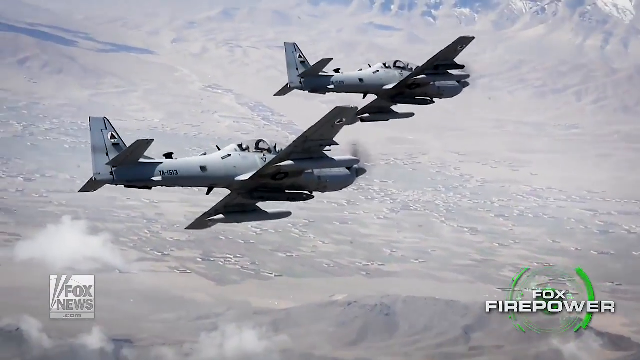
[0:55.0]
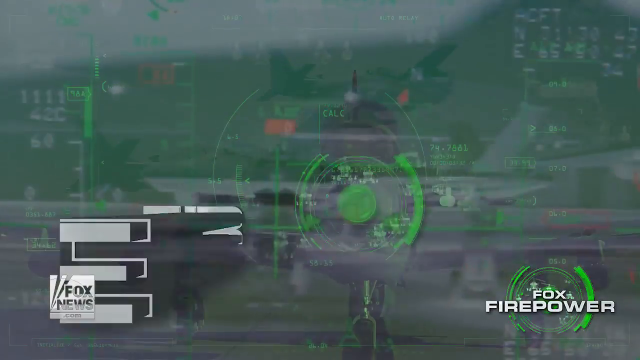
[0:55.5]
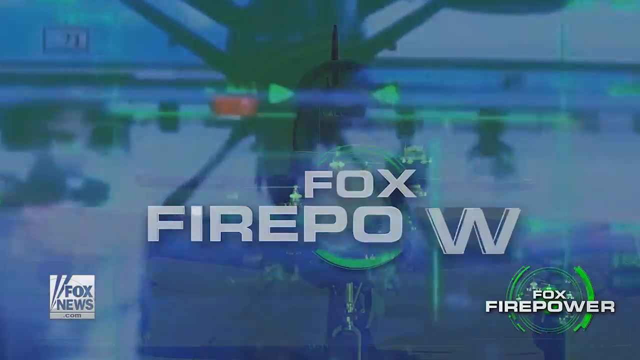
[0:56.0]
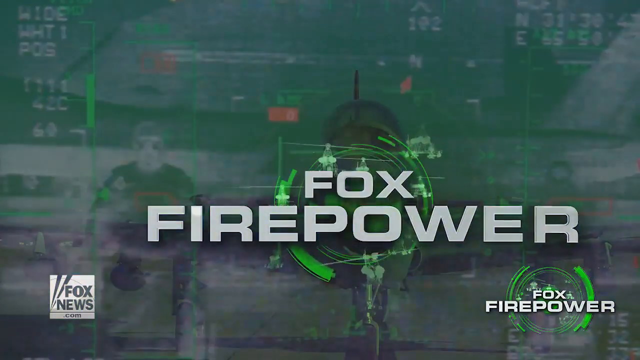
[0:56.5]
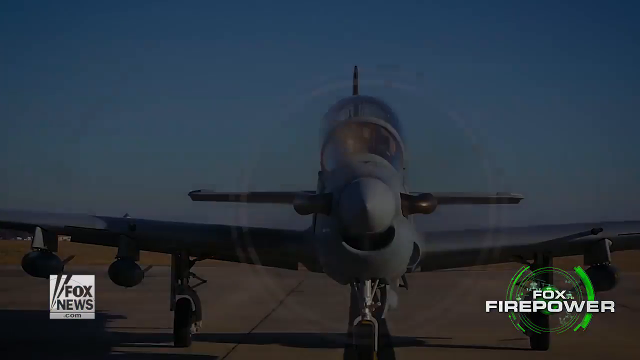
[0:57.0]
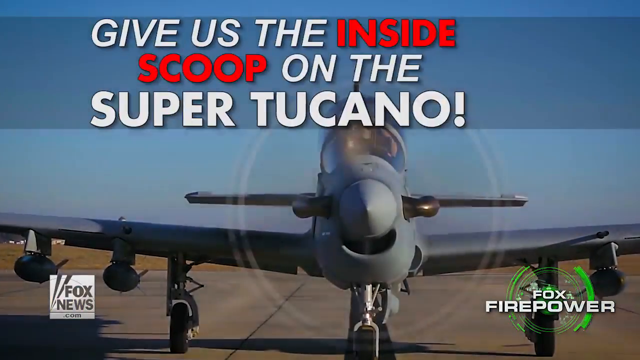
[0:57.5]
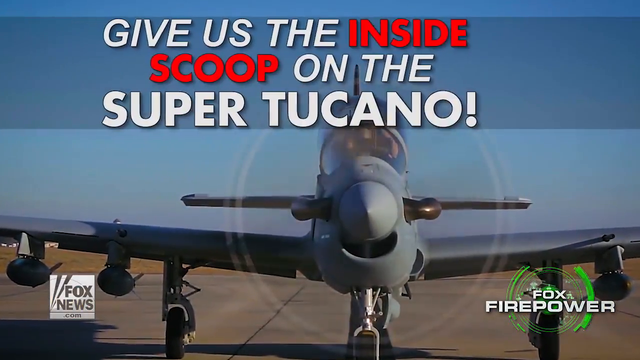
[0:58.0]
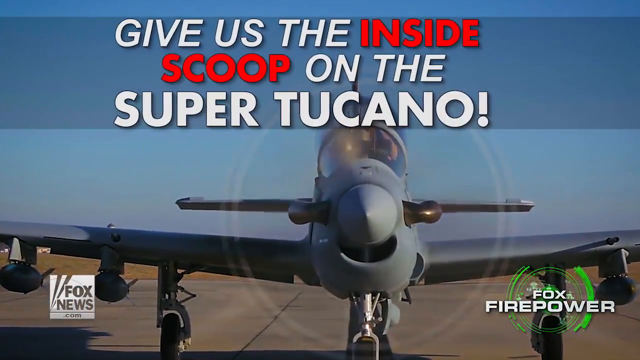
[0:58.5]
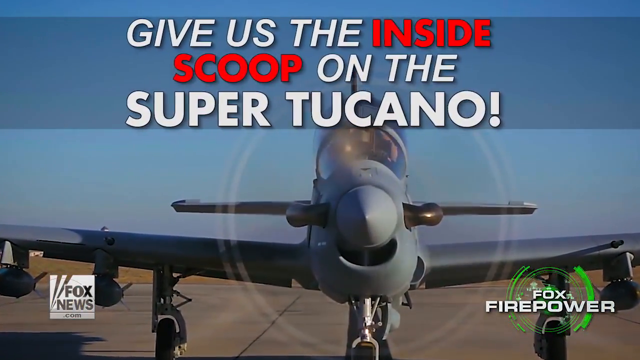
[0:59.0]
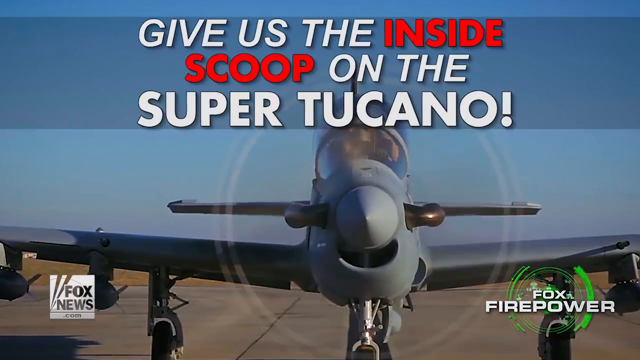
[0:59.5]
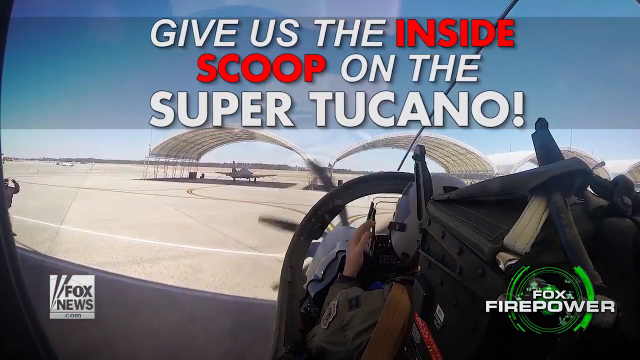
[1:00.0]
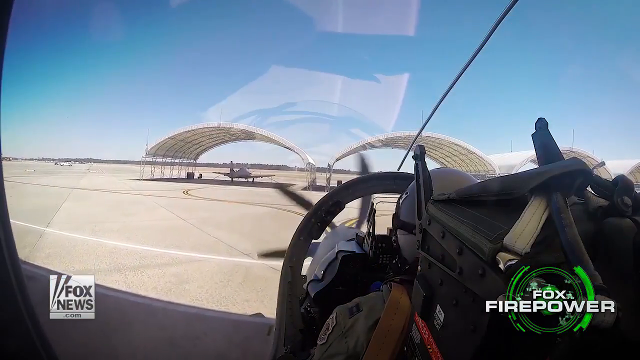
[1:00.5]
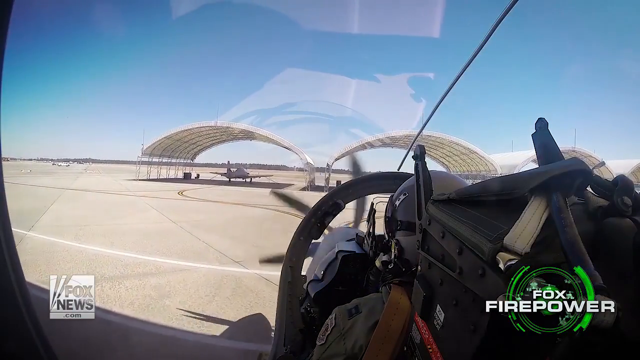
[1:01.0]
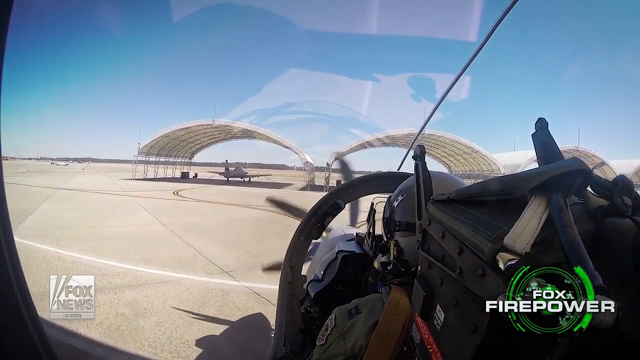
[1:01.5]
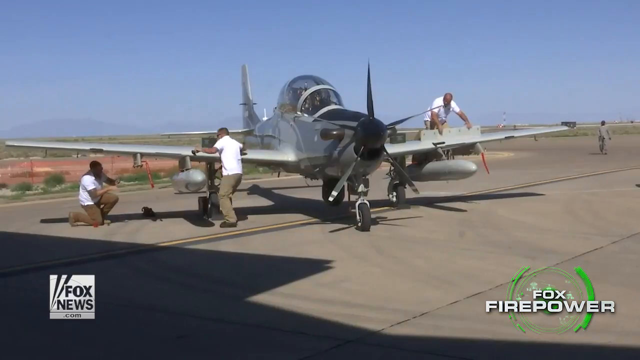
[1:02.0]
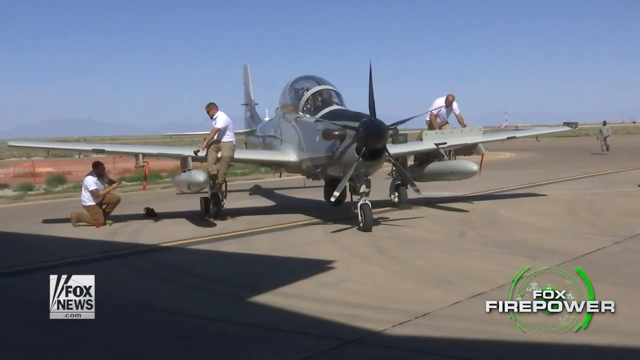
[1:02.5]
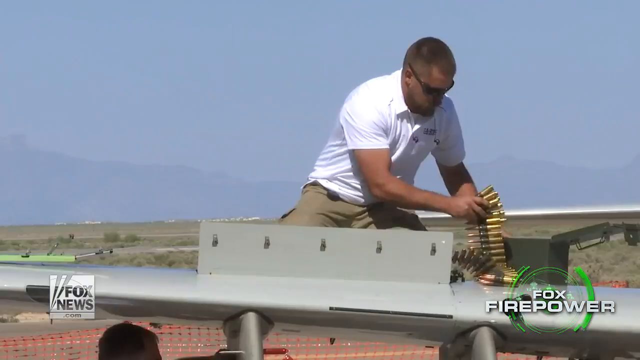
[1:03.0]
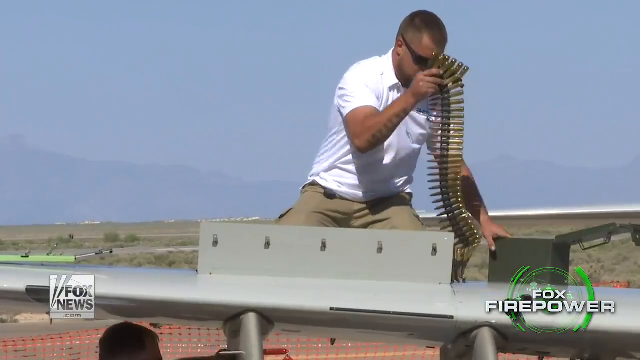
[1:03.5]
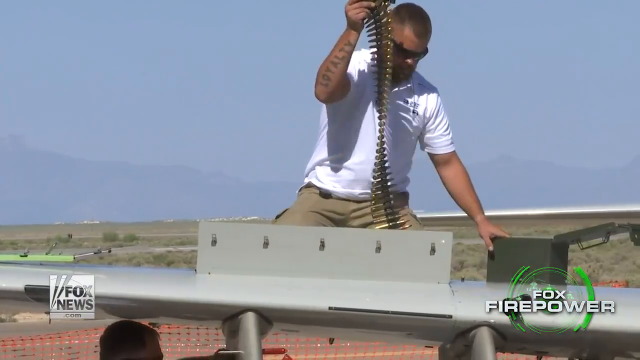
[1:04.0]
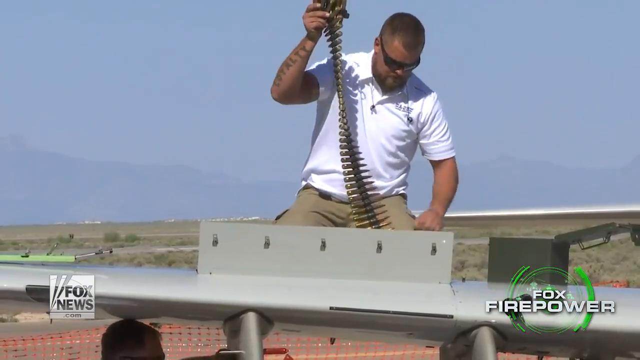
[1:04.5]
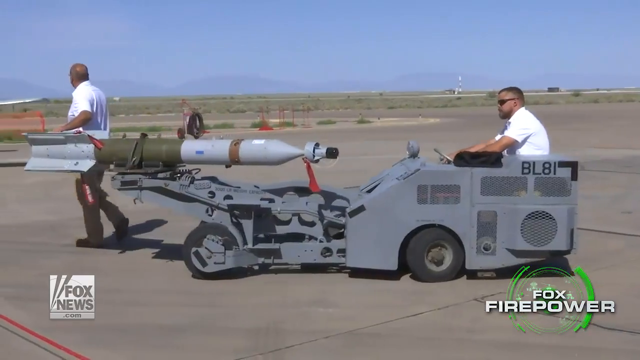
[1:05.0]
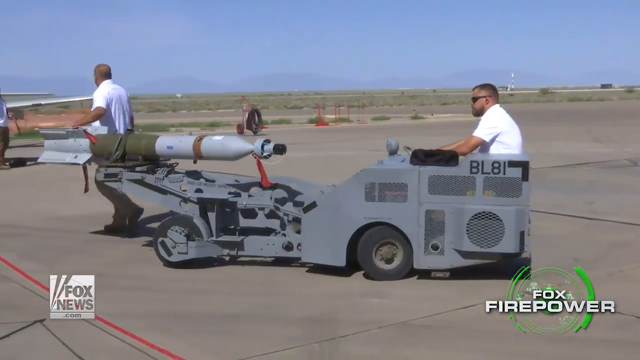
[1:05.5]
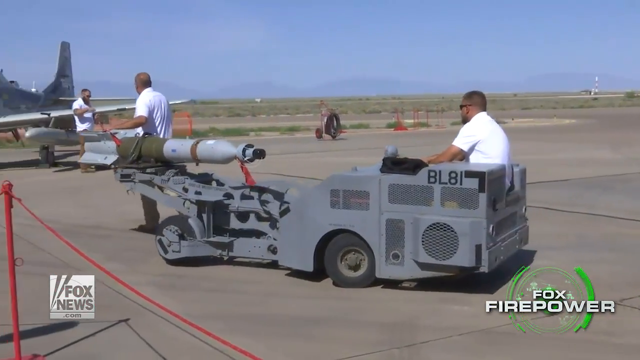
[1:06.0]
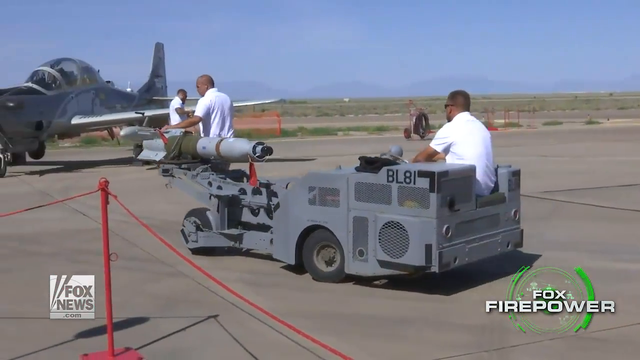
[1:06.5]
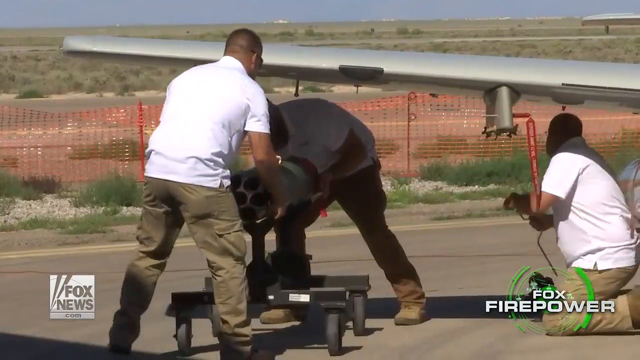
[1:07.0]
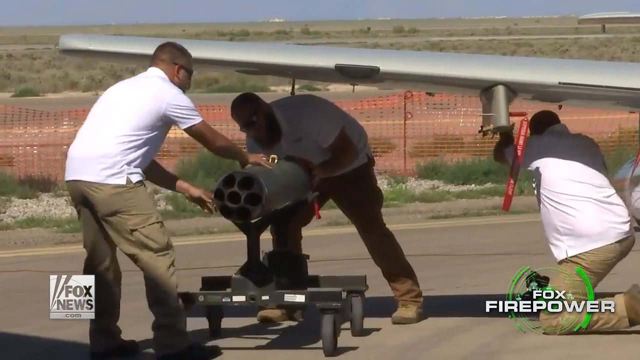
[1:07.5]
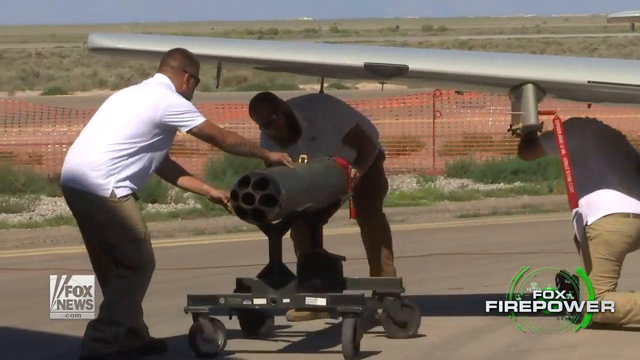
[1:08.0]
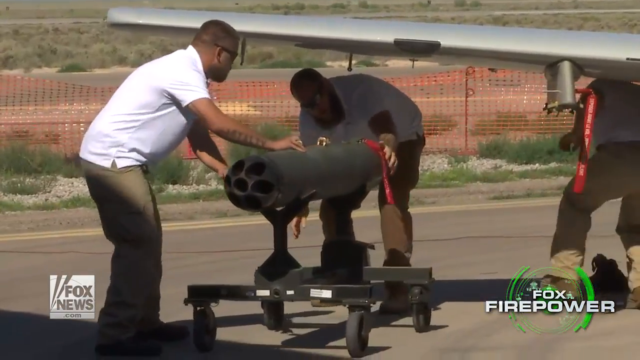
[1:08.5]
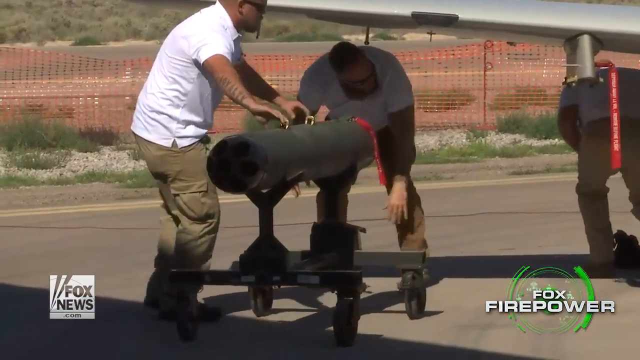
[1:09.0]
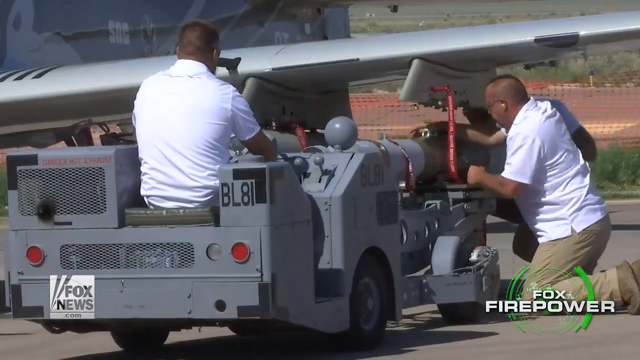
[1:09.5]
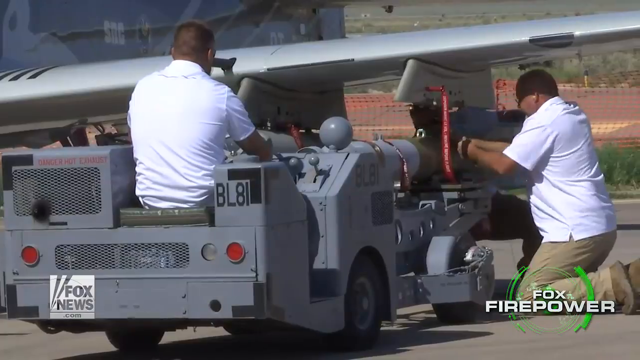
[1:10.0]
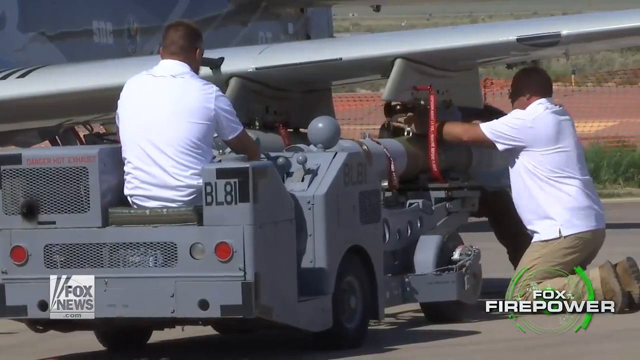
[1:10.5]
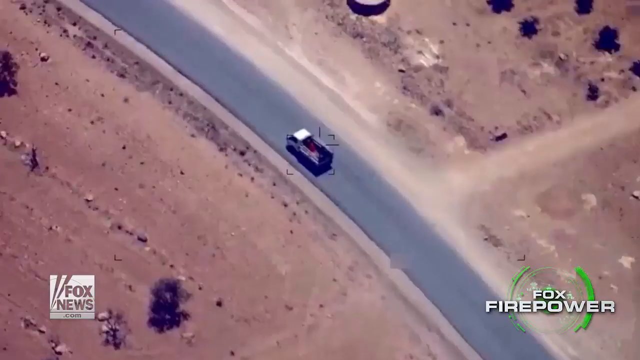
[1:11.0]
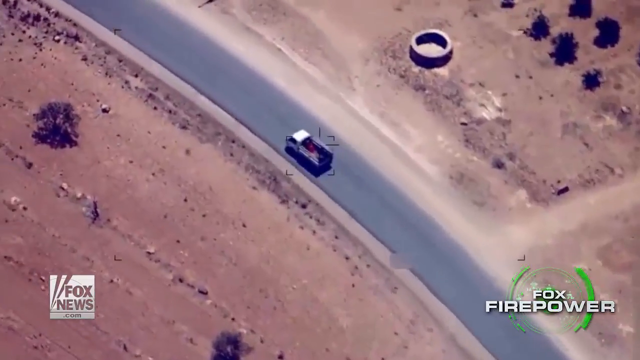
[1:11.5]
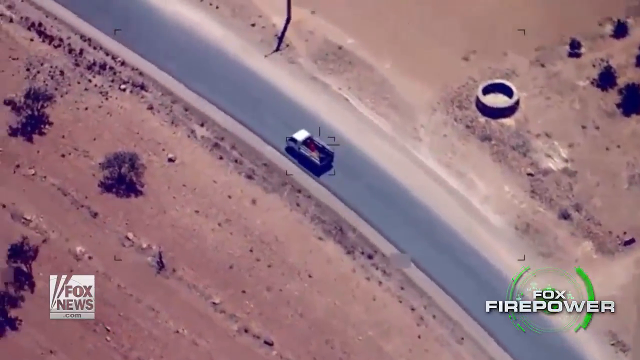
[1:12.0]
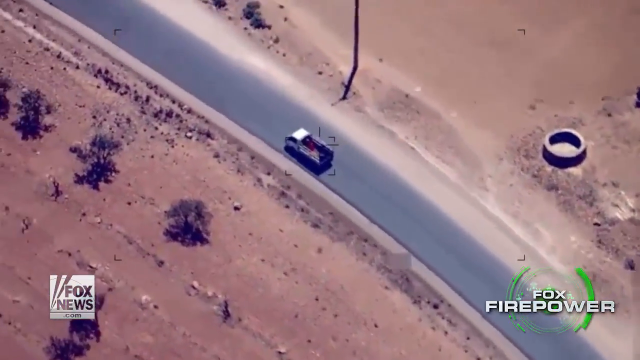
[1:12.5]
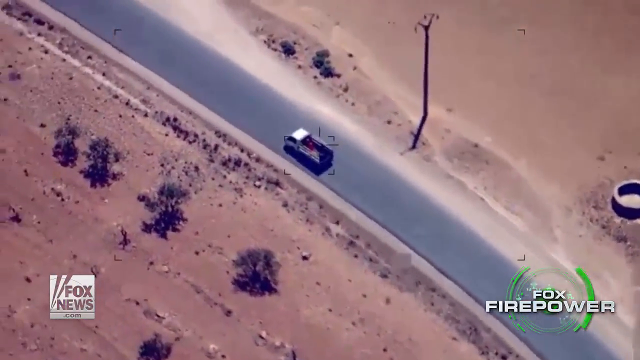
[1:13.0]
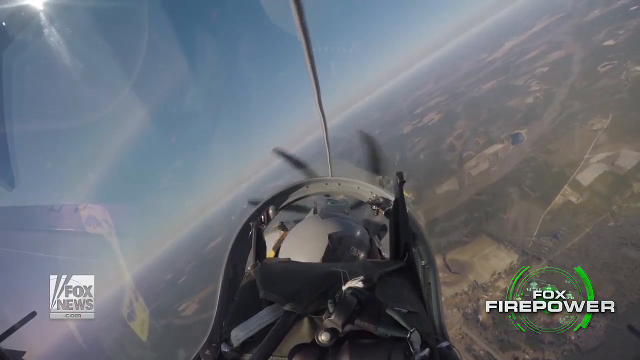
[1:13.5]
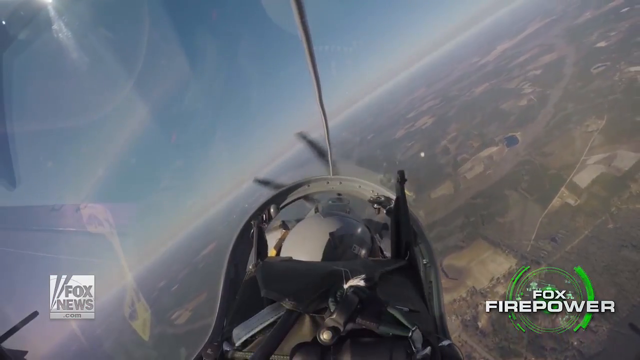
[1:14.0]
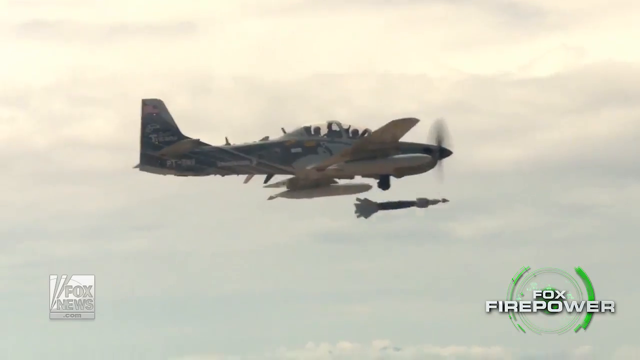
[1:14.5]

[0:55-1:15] "firepower" appears, followed by a plane landing with a pilot flying it. A group of men in the landing area prepare for the landing, arranging and fixing things while the plane is about to land. The men all wear the same uniform of white shirts and cotton-colored trousers; they all look to be within the same age range, and all are black men. One plane drops something that looks like a missile onto an area. The plane is then loaded with bullets and other things for a military operation, and one of the men sits on the wing of the plane fitting in the bullets.